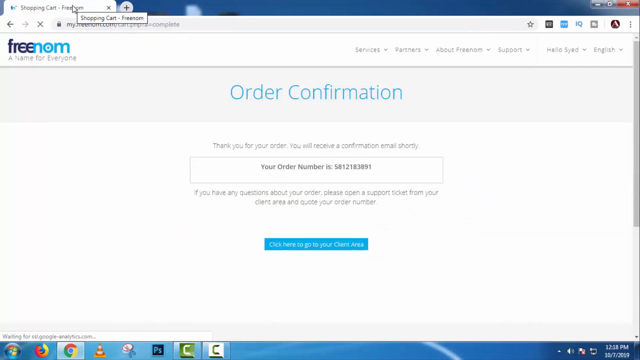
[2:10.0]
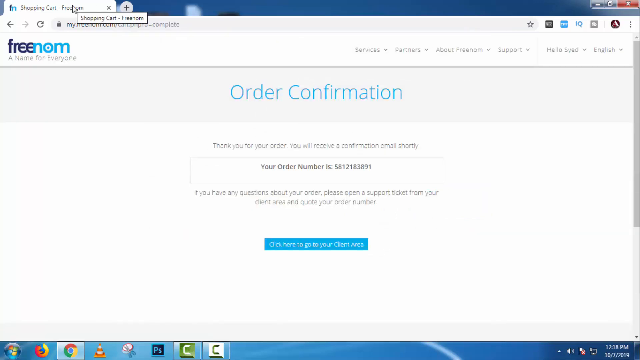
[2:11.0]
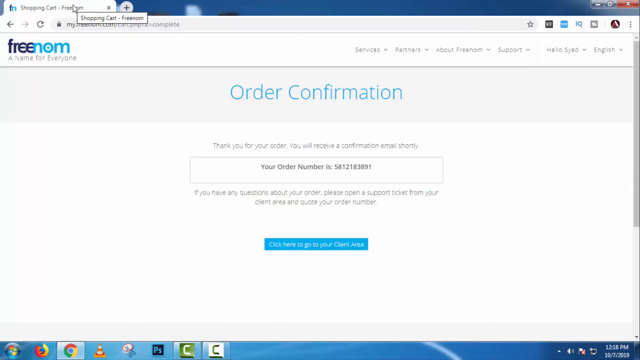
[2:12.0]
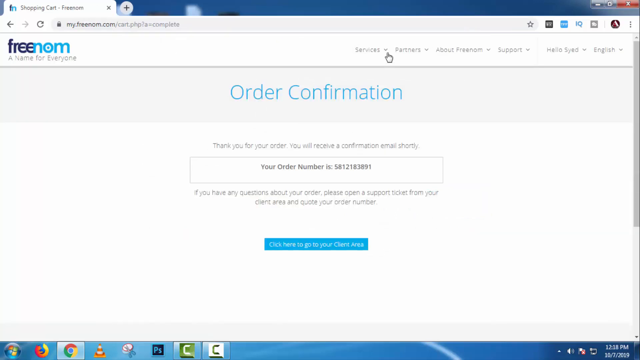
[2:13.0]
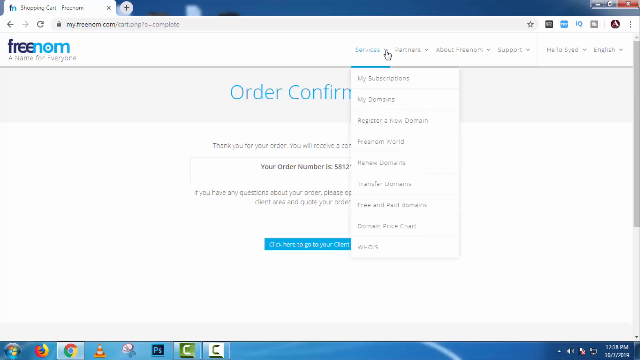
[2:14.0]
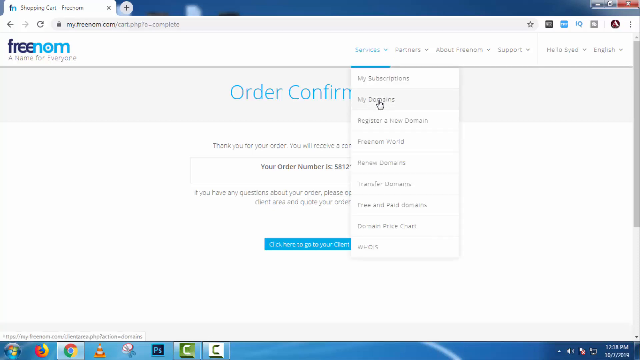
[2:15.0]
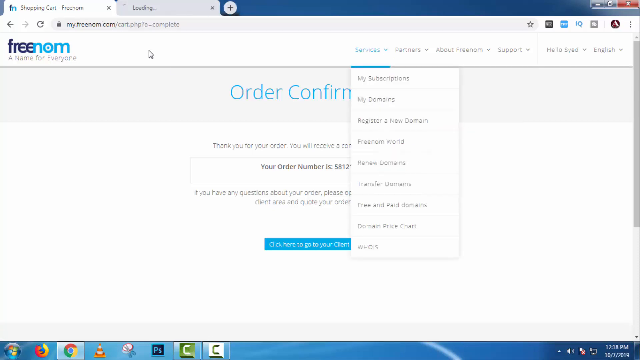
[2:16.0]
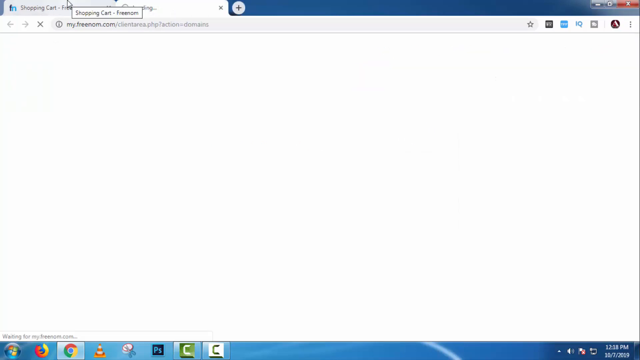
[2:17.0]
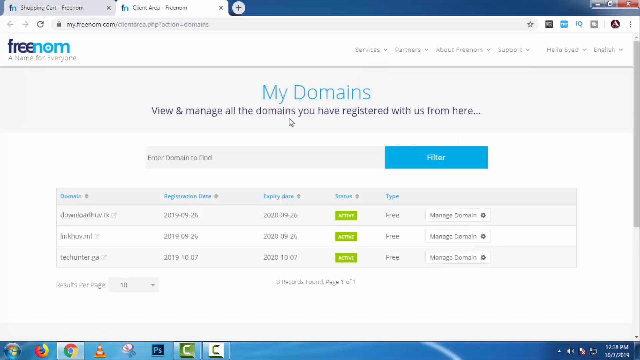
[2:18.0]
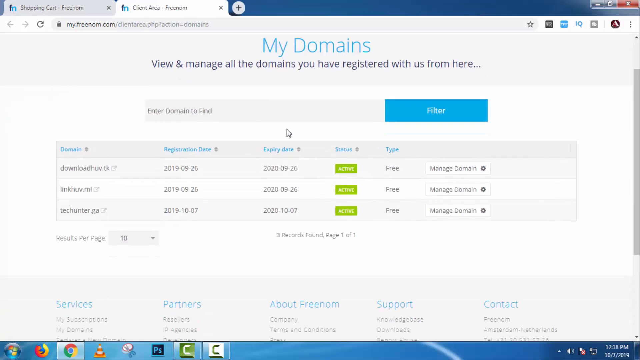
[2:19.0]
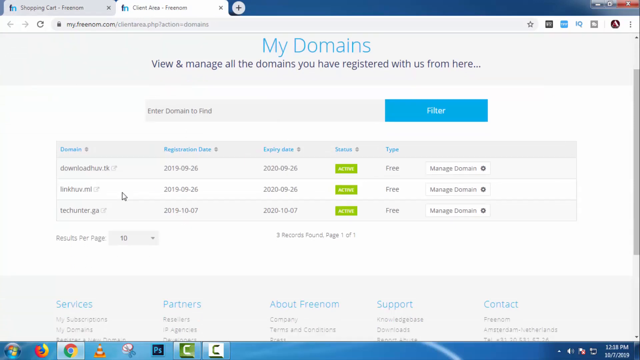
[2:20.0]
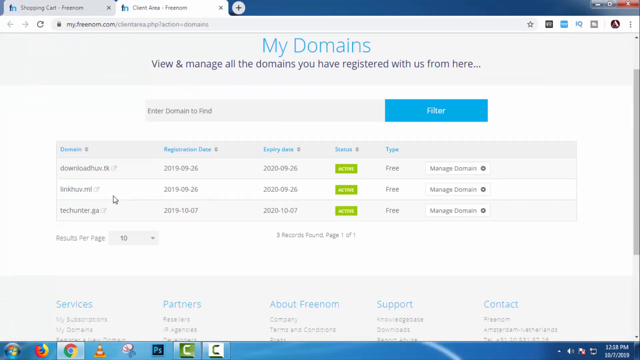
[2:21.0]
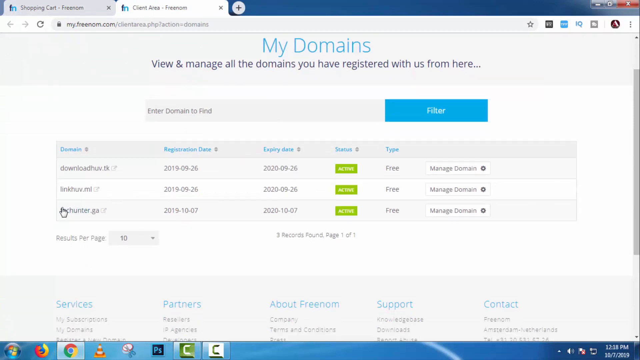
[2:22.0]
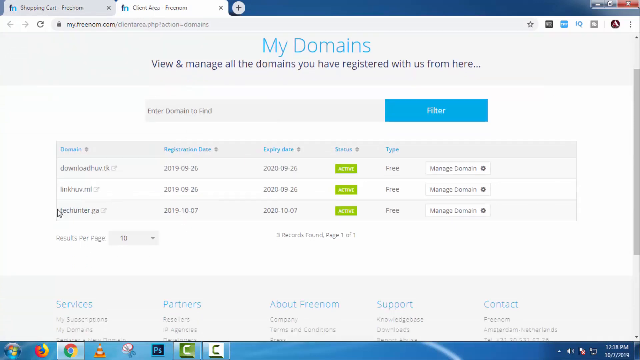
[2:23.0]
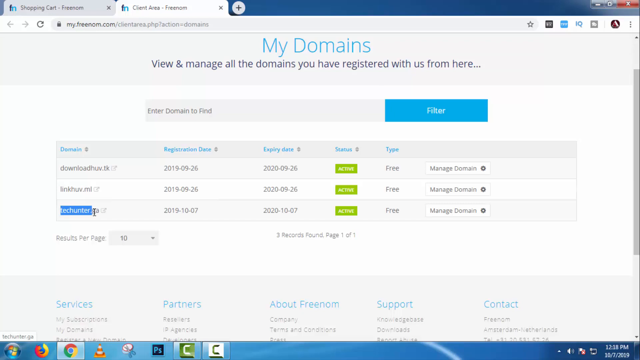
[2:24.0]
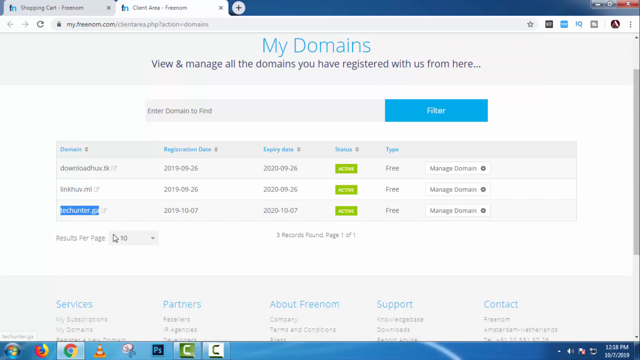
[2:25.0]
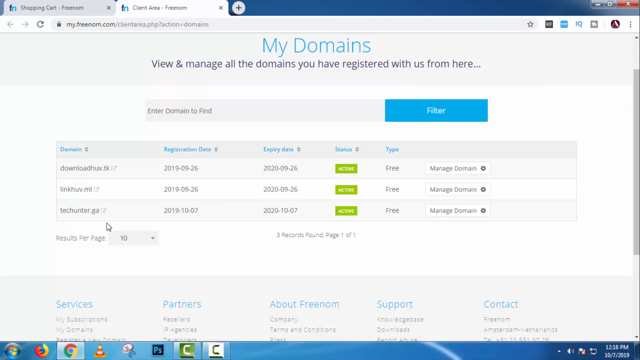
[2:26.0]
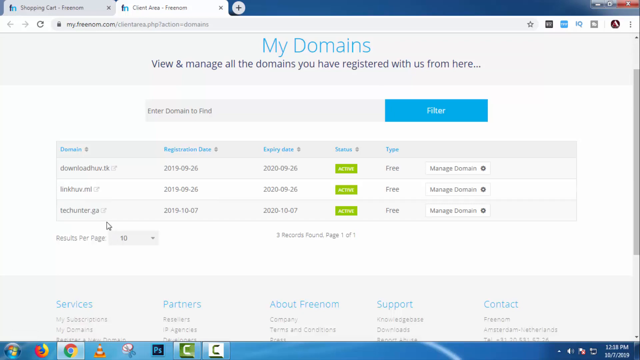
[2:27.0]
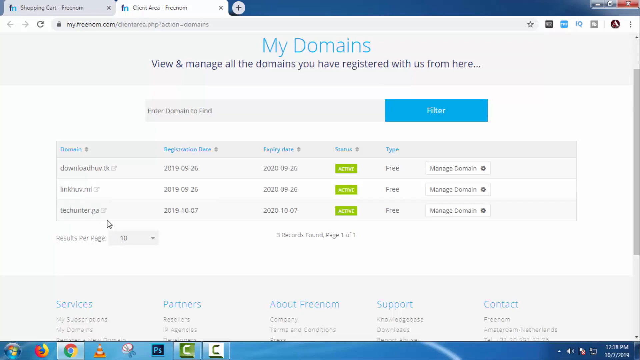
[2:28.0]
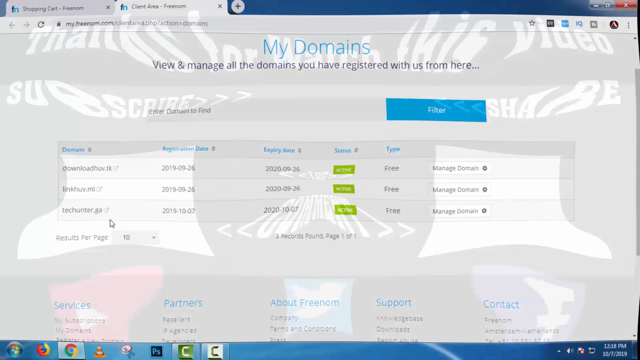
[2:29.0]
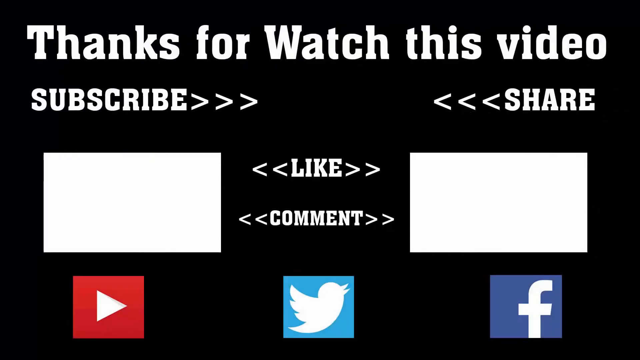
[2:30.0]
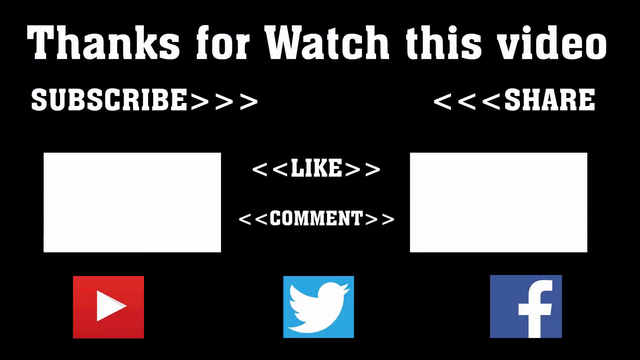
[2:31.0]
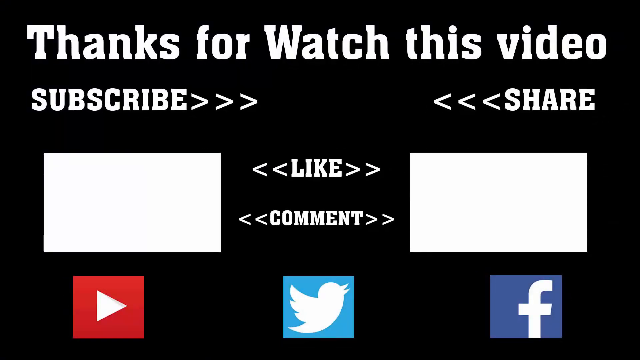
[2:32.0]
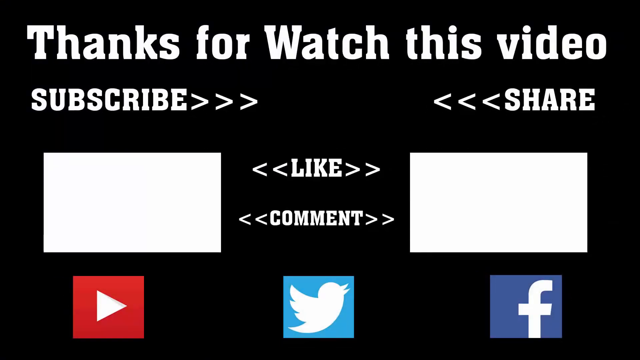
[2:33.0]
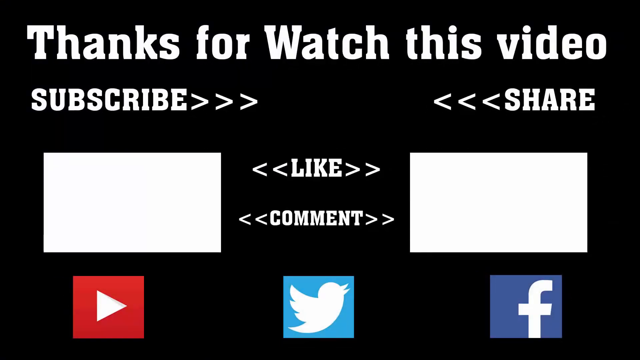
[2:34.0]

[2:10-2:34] The order confirmation page appears in the same blue, with small black text underneath reading "thank you for your order. You will receive a confirmation email shortly." Below that, a large rectangular box contains smaller bolded text reading "your order number is" followed by an order number. Two more lines of text follow, then a blue button or text box reading "click here to go to your chart area." The little hand then goes up to services, a drop-down menu opens, and an item reading "my domains" in blue is apparently clicked. That page is titled "my domains," with a black tagline underneath reading "view and manage all the domains you have registered with us from here." Below are three registered domain names with some details, little green buttons reading "active," a column reading "free," and a dropdown on the right reading "manage domains." The video then switches to an all-black screen with white serif text reading "thanks for watch this video." Underneath is "subscribe" in all caps with "share" to the right, with arrows pointing toward the middle. Below in the middle are "like" and "comment," with an empty white rectangle on either side. Three social media icons are at the bottom: YouTube on the left, Twitter in the center and Facebook on the right.